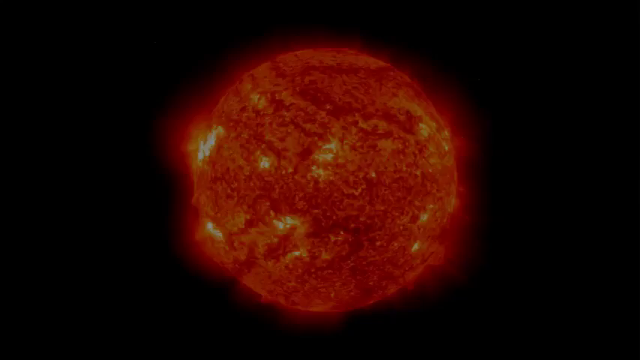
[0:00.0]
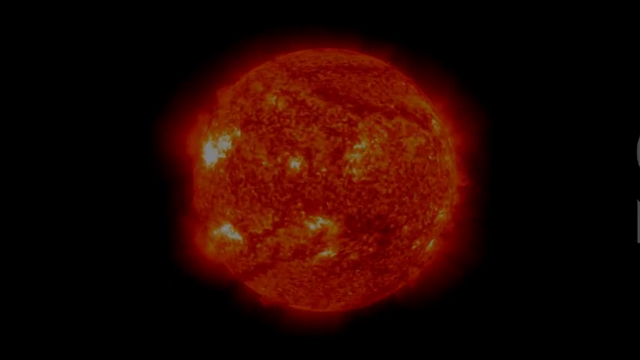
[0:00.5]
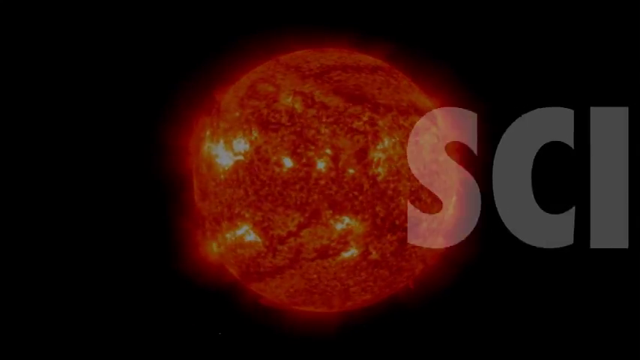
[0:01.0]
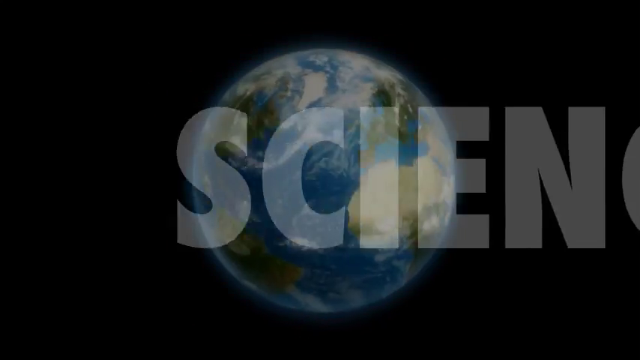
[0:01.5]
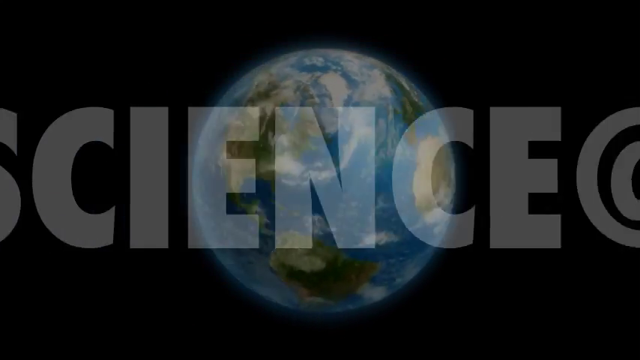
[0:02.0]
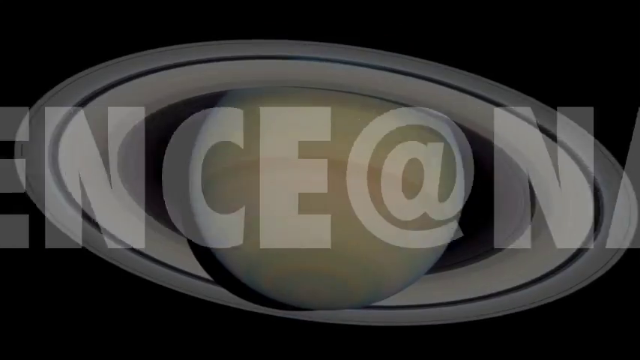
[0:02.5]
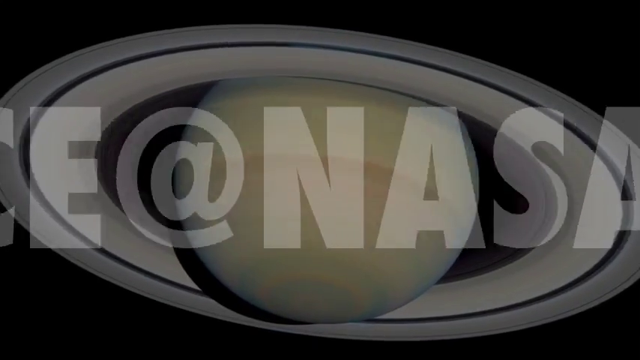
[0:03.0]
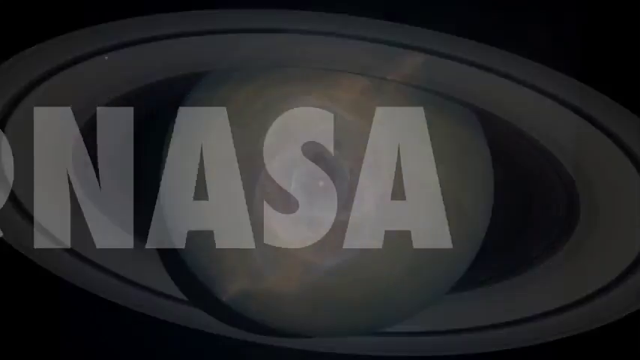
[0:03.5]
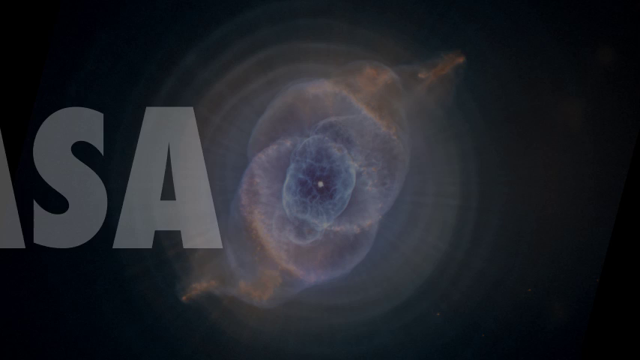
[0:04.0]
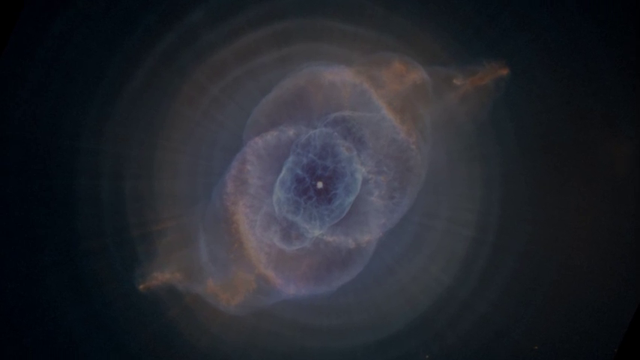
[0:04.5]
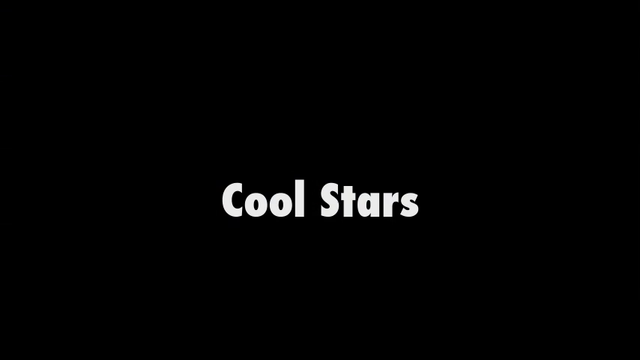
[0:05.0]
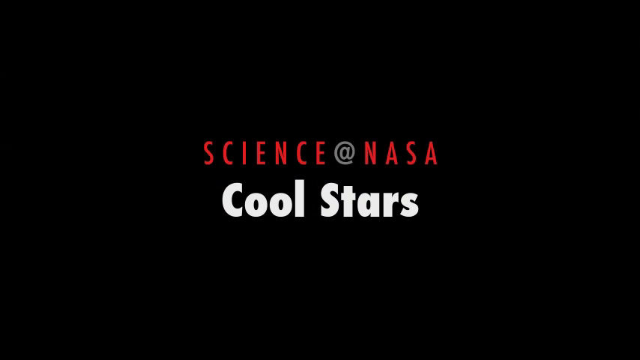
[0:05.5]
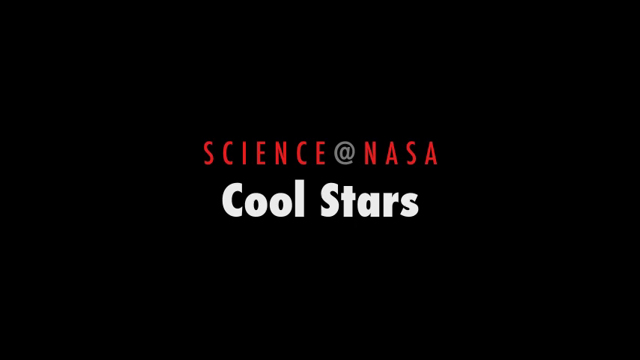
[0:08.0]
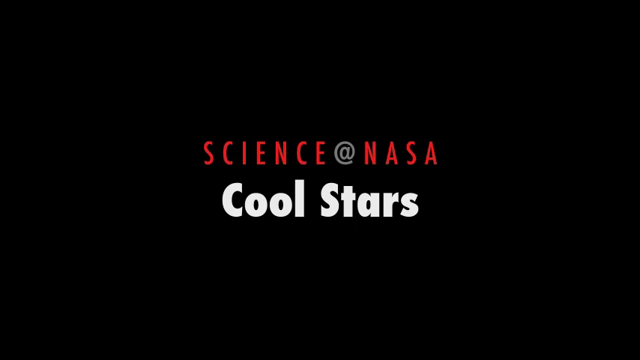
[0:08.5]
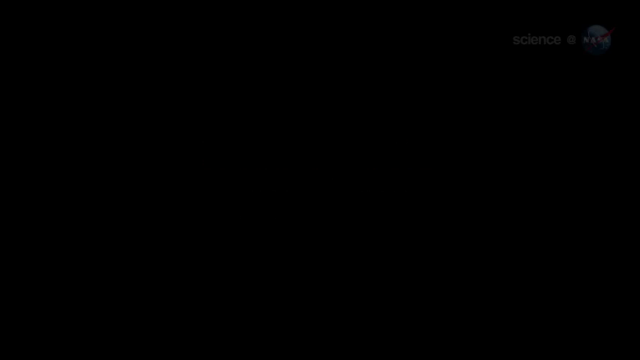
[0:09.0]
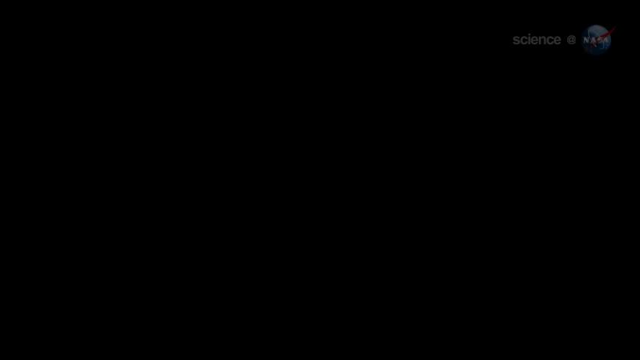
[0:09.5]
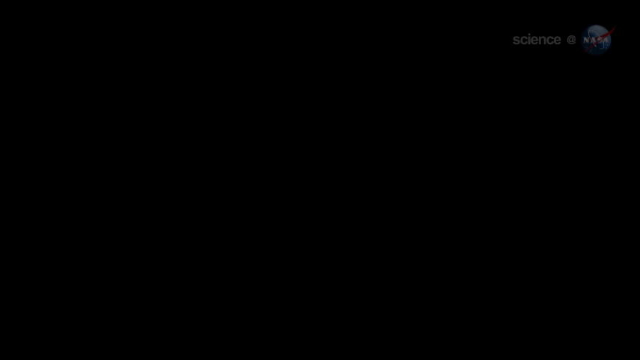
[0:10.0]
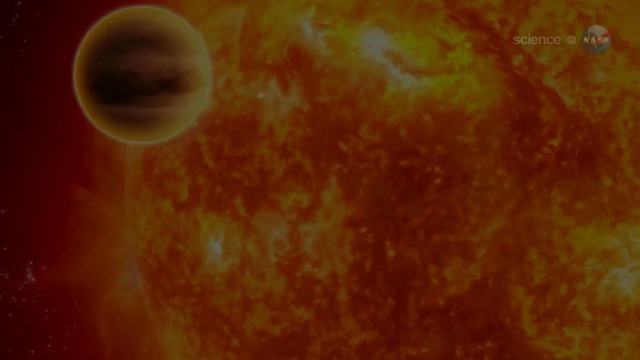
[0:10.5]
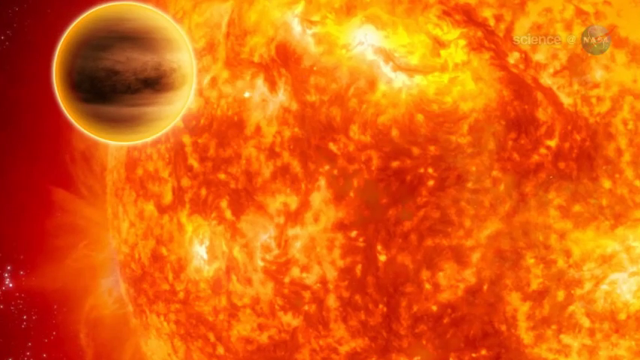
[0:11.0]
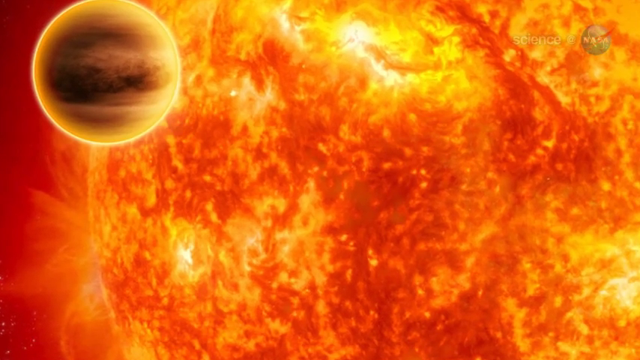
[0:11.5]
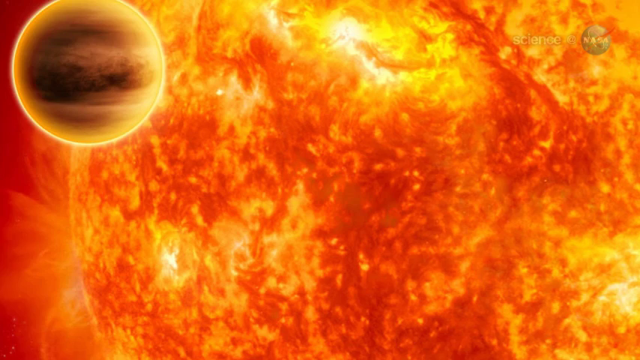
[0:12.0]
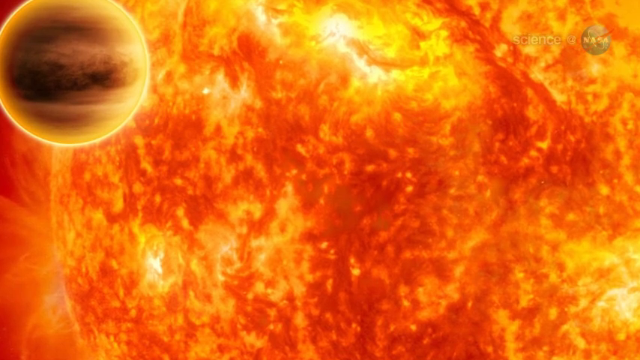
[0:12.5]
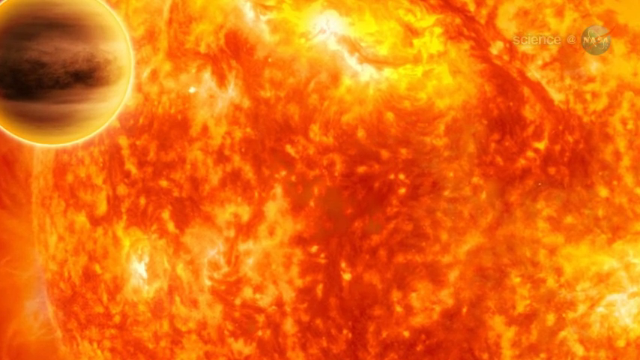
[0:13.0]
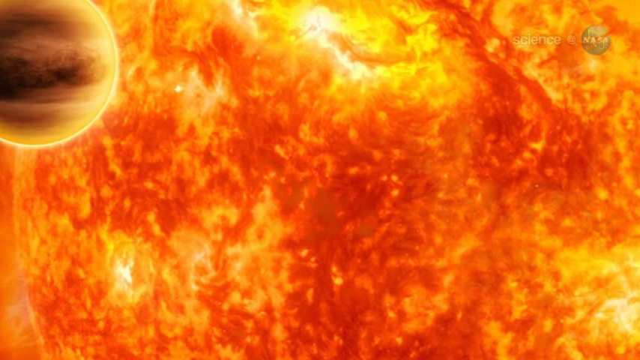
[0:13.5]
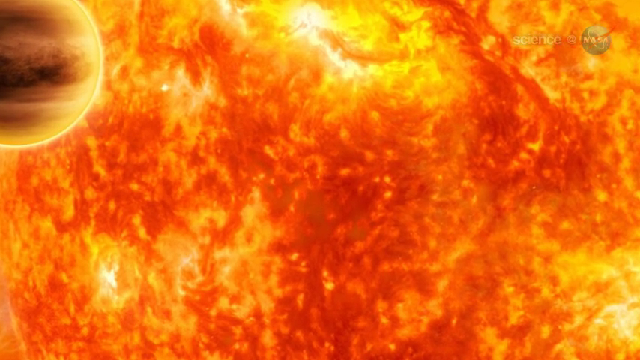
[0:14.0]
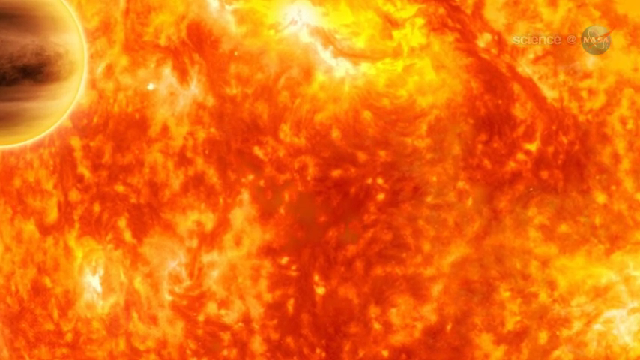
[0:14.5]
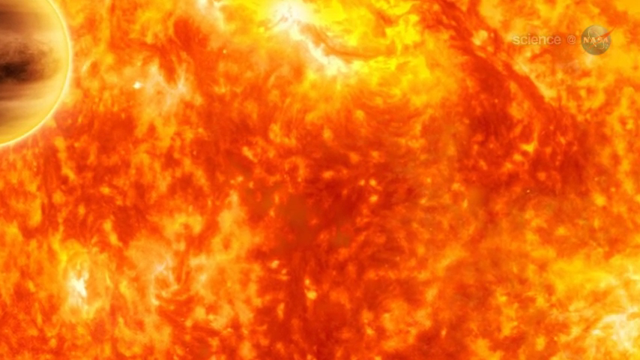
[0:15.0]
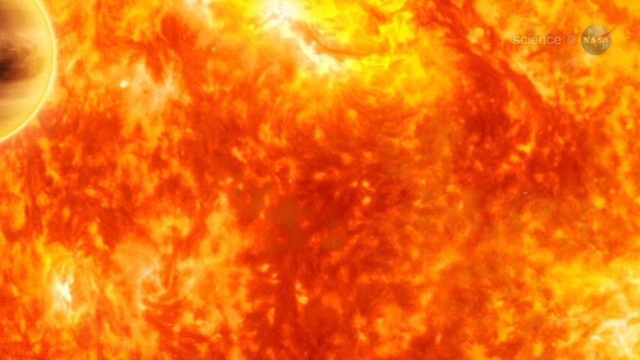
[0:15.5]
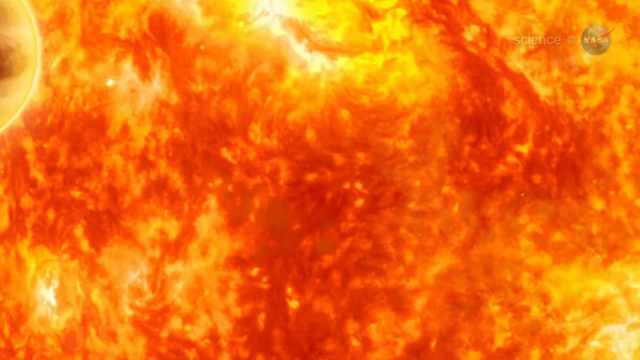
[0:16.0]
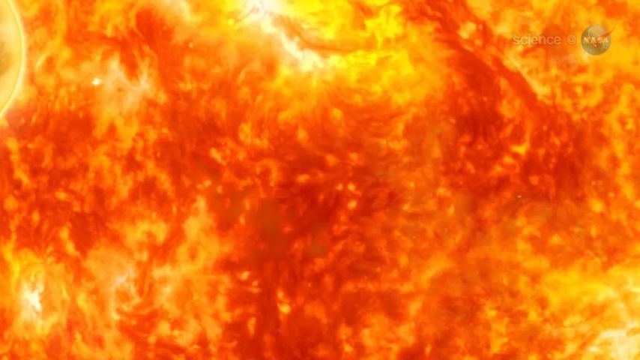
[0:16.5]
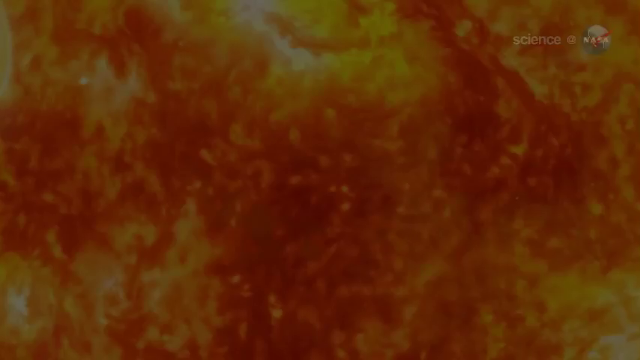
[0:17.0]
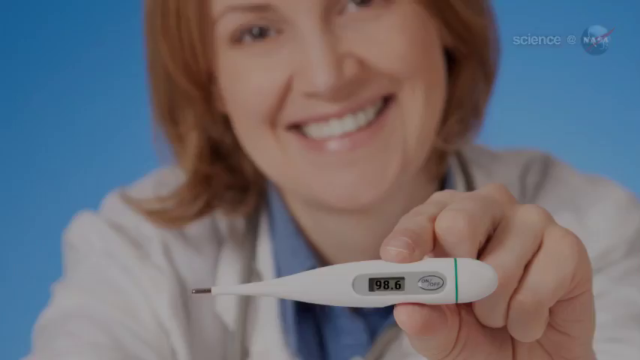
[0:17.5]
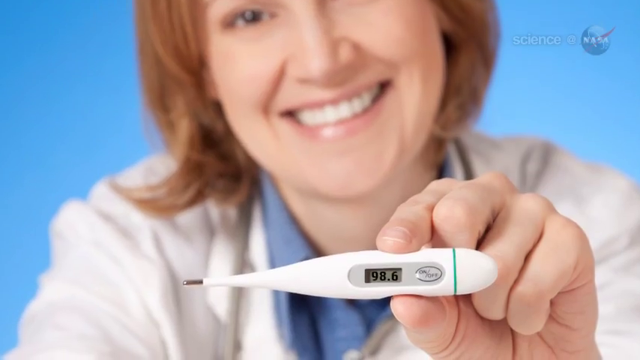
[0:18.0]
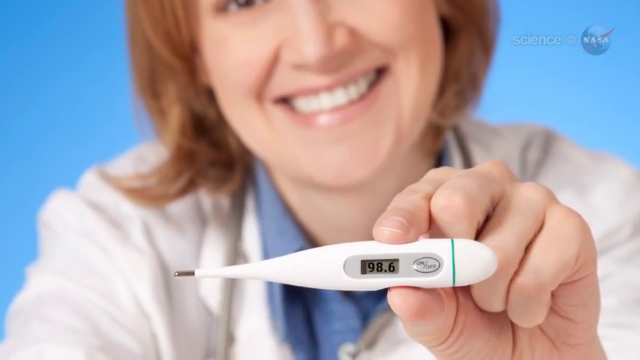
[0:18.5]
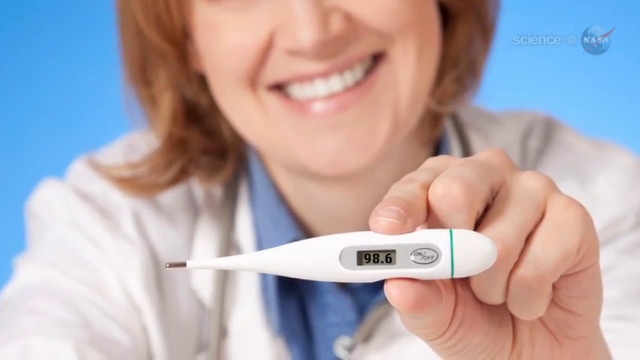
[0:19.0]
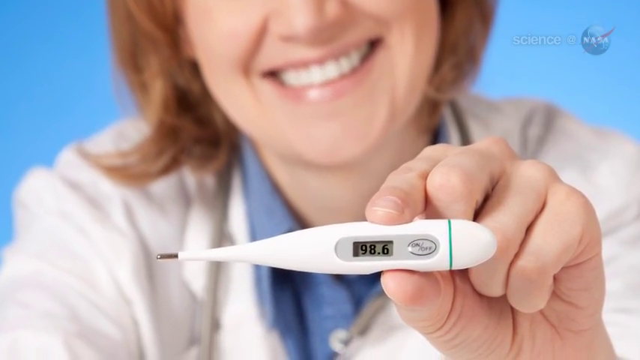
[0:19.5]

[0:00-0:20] What looks like a video of the Sun appears in the middle of the screen, then immediately changes to the planet Earth, with "science at NASA" written across the screen in bold capital text. The Earth turns into Saturn, then into a galaxy. The video cuts to "science at NASA" in the middle of a black screen with little stars. It then cuts to a still image of the Sun, and the camera zooms in on it. Next, a doctor holds a white device used to take someone's temperature, which reads "98.6". The woman holding the device smiles at the camera and is very happy with the result. The tip of the device has metal on it.